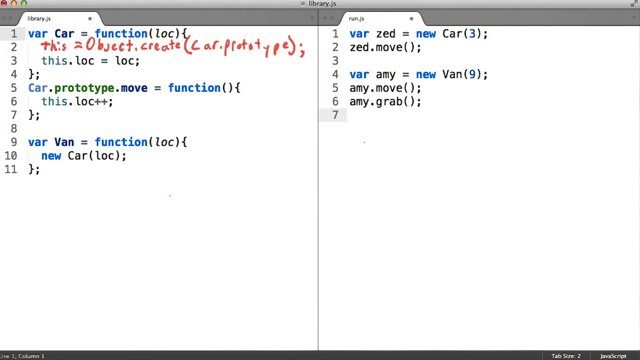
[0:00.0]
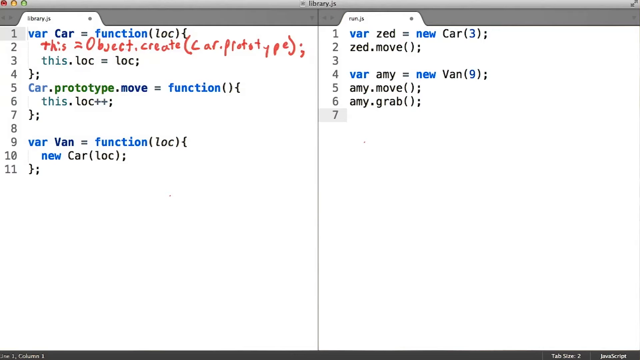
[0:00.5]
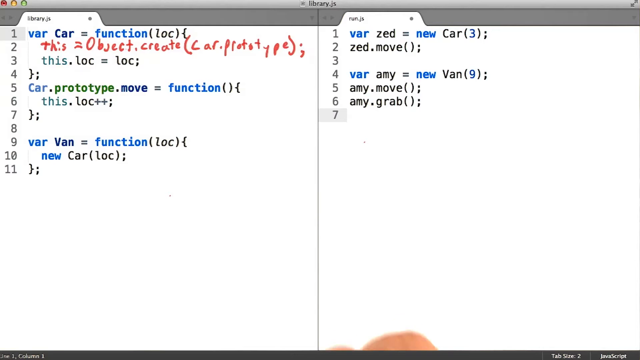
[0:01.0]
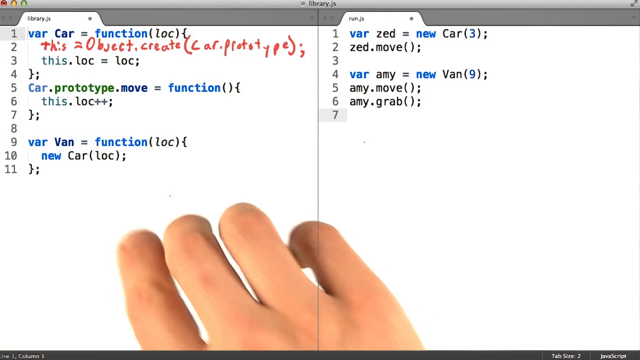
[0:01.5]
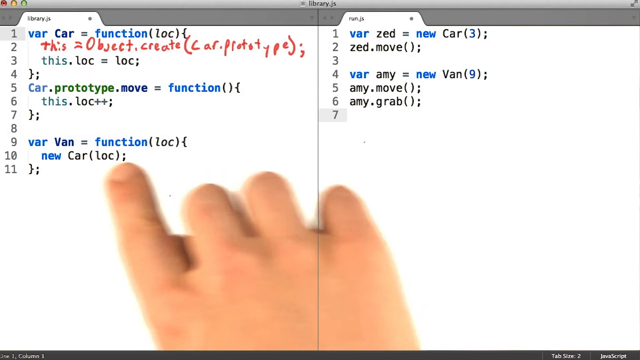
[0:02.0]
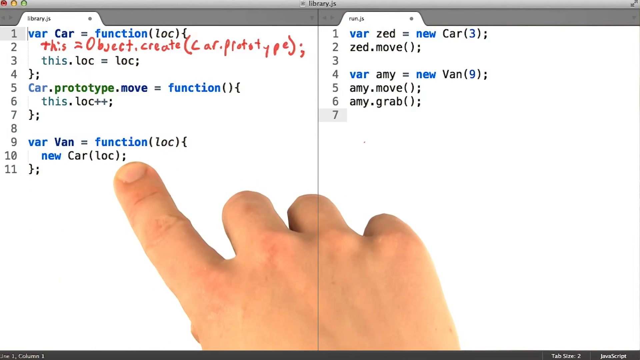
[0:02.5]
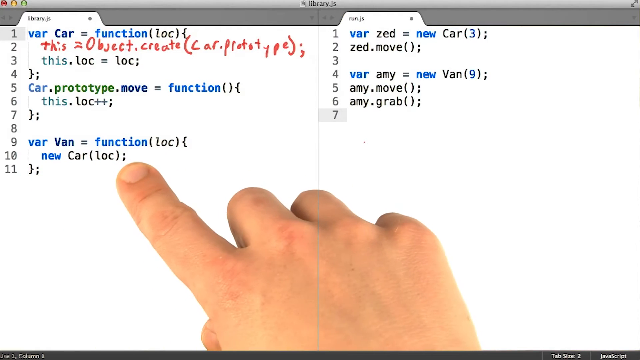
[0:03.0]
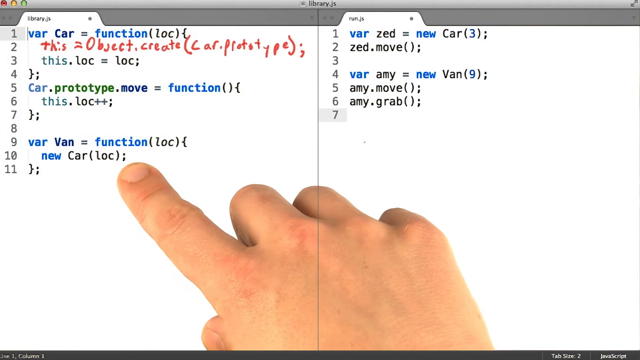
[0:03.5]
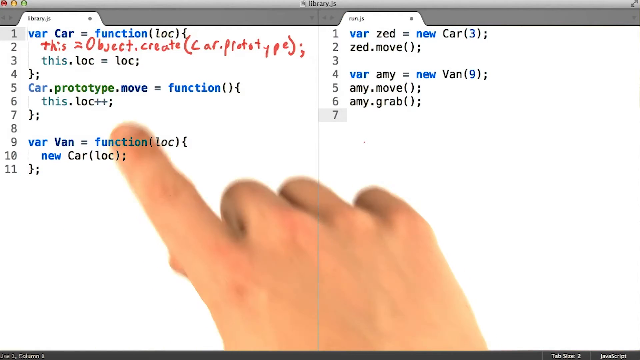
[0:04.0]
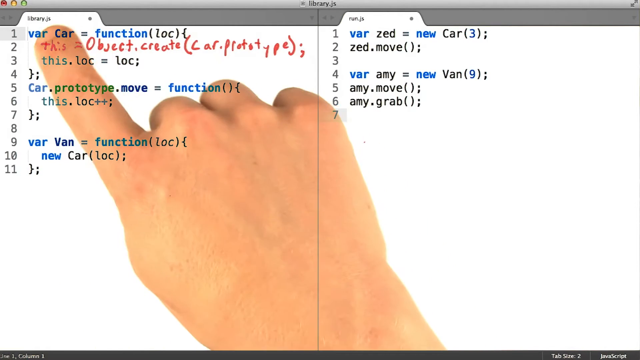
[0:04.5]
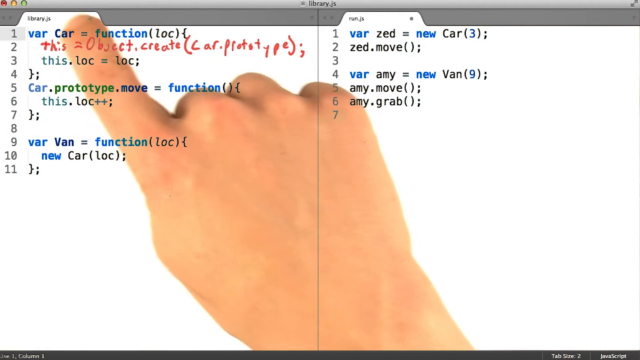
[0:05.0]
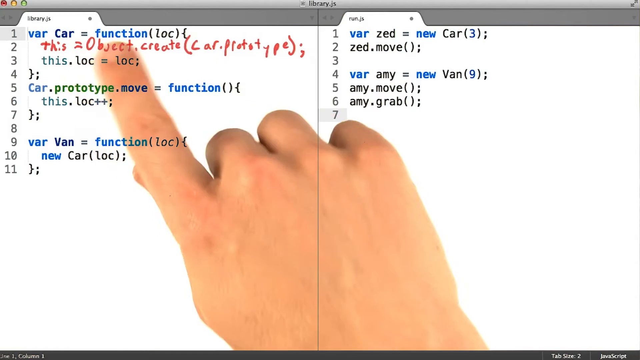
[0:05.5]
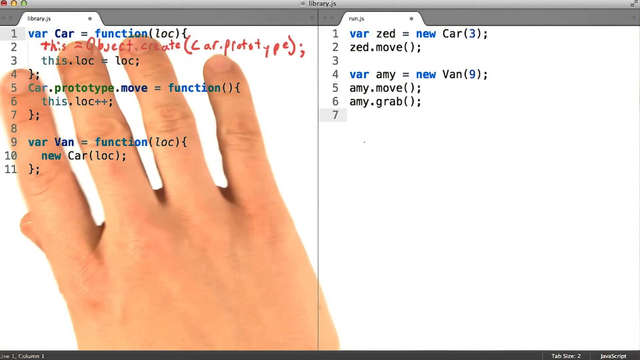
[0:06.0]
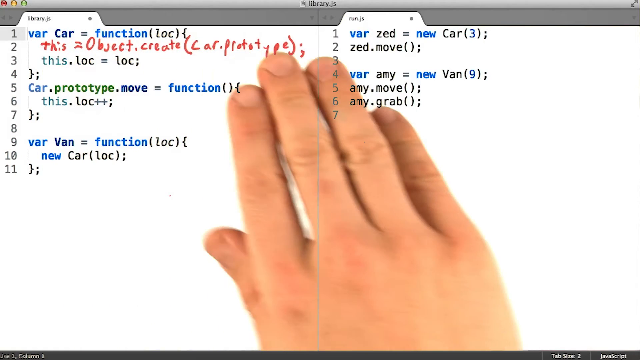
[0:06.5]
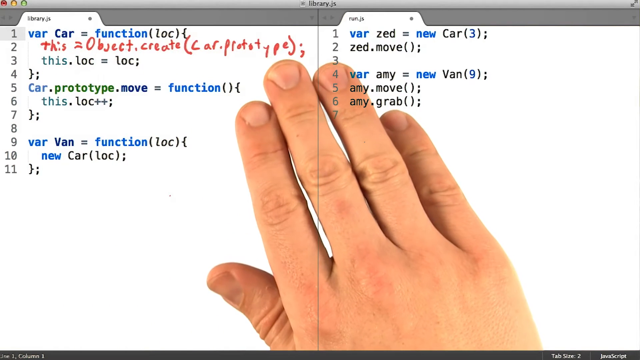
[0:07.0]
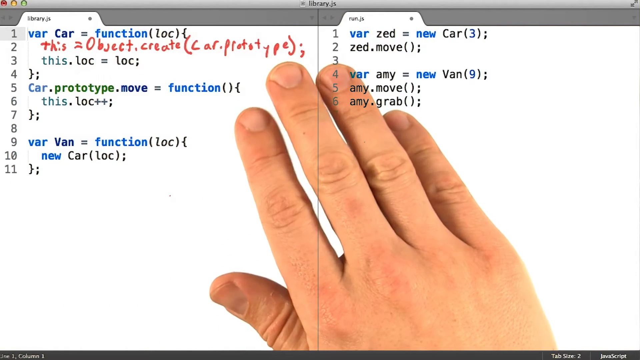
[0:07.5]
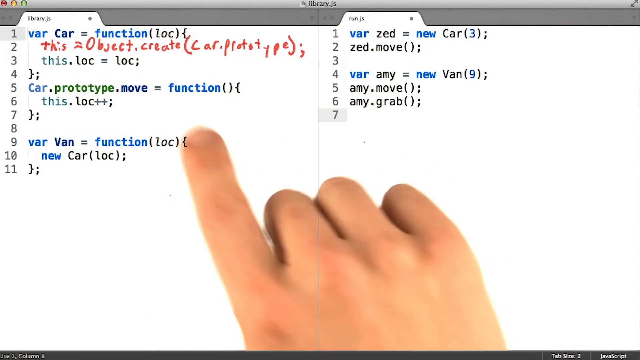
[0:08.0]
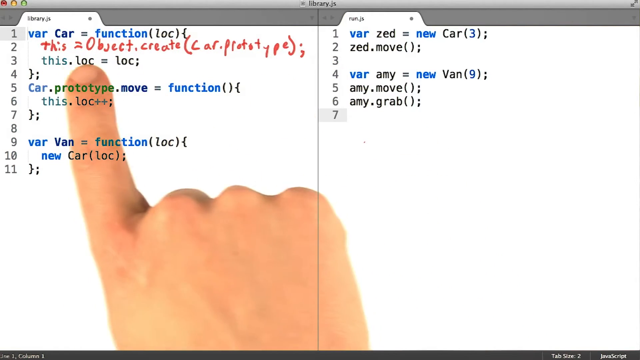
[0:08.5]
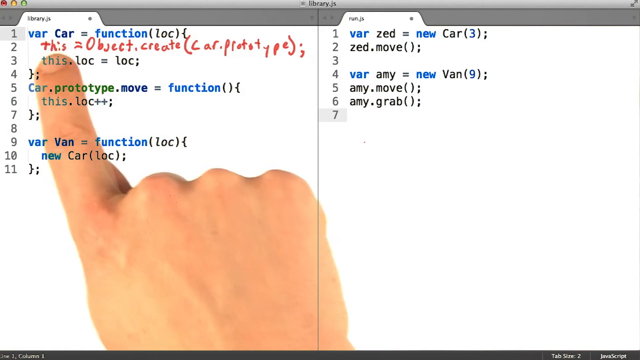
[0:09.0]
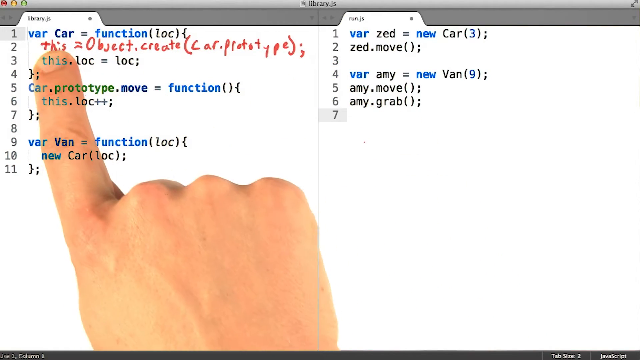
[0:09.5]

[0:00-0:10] What looks like a computer window is shown with a split screen. On the left-hand side are 11 lines of code. The first line says "var Car equals function" with the letters "loc" in parentheses, possibly short for location. Underneath, in red handwritten text, it says "this equals object create" and then "car.prototype" in parentheses. Additional lines of code follow with some variation on the original. On the right-hand side it says "var zed equals new car" followed by the number three in parentheses. A person's hand appears on the screen and makes gestures as if grabbing lines of code from the left and moving them to the right.